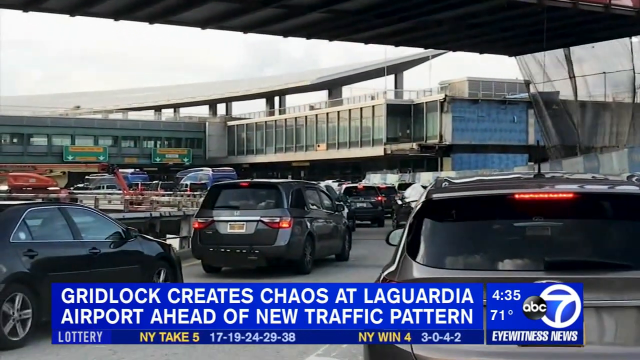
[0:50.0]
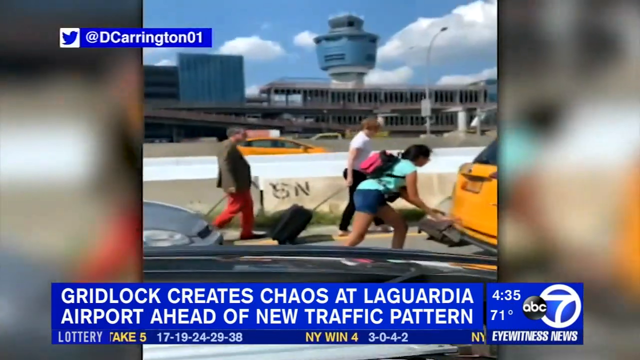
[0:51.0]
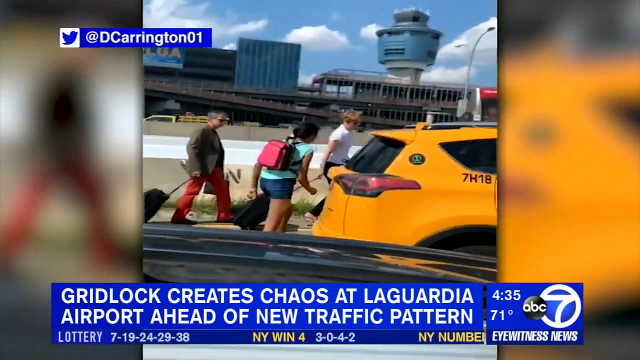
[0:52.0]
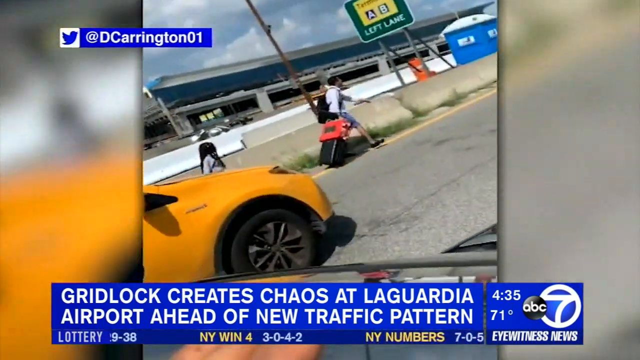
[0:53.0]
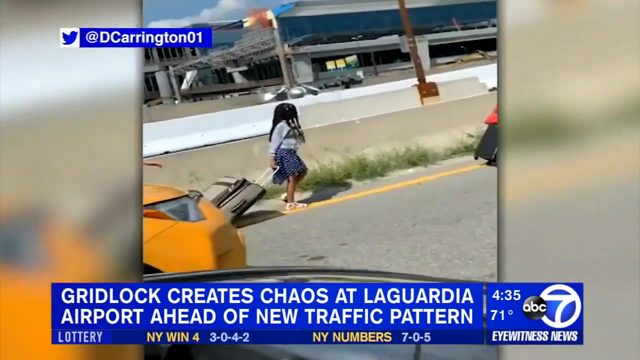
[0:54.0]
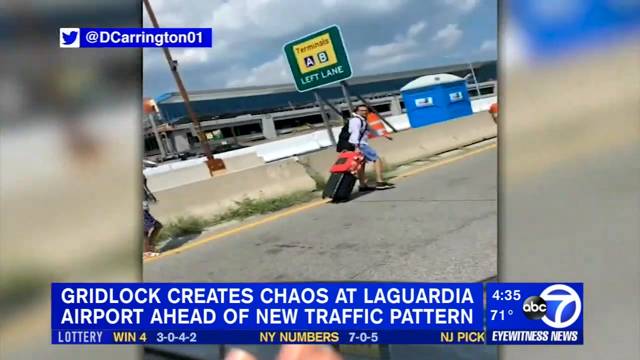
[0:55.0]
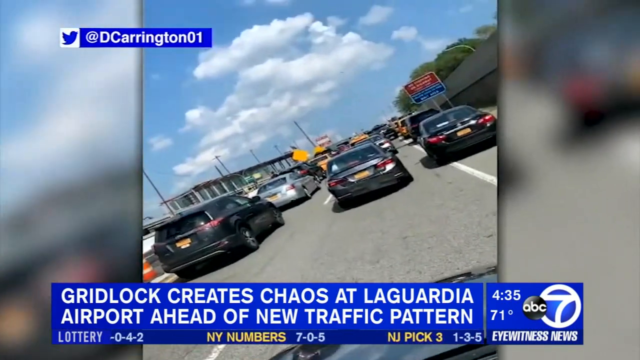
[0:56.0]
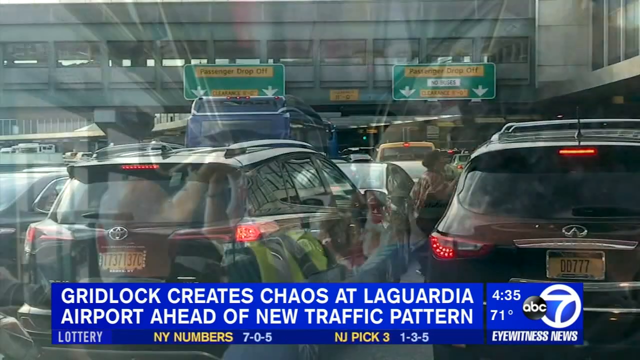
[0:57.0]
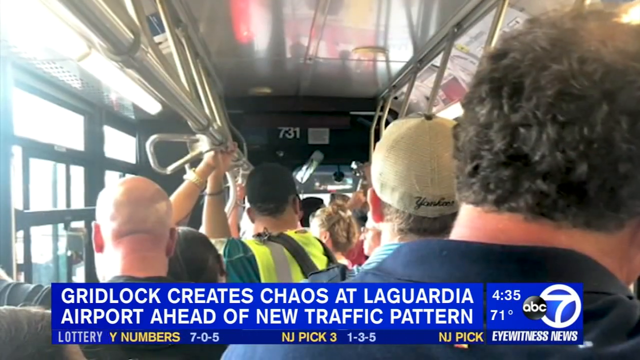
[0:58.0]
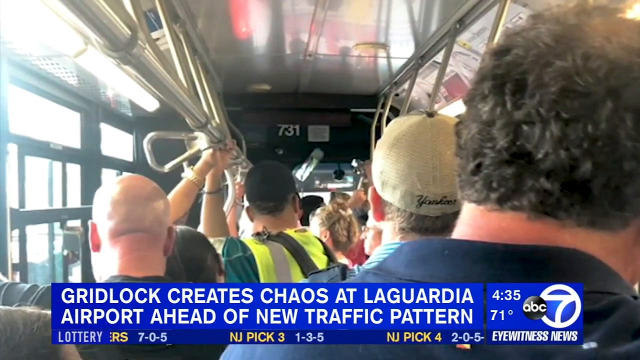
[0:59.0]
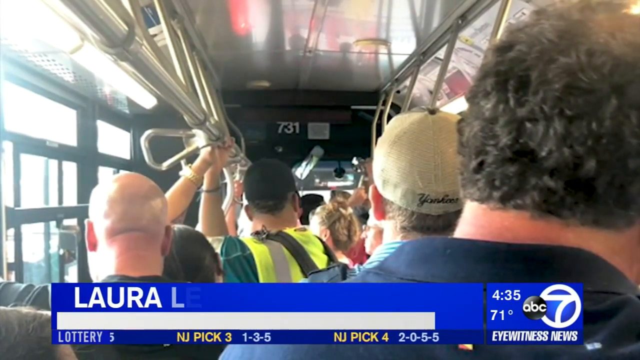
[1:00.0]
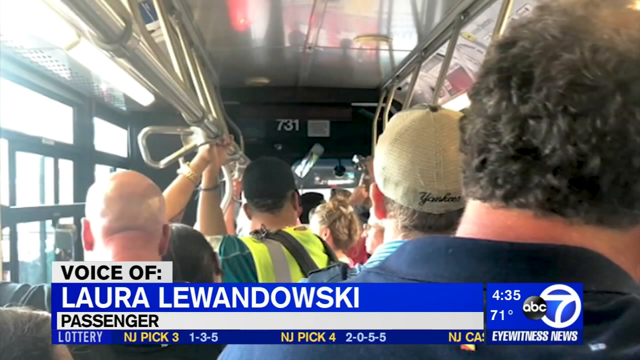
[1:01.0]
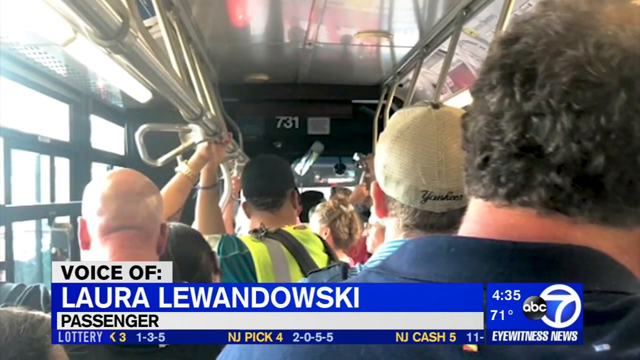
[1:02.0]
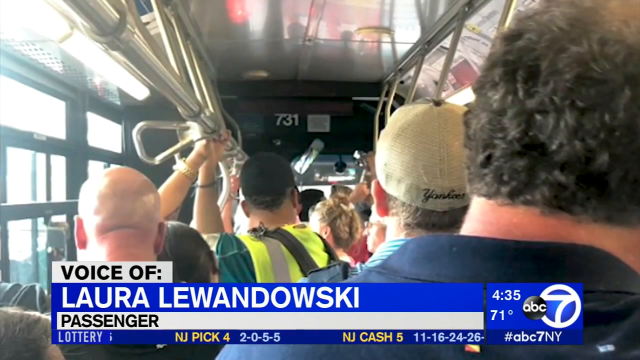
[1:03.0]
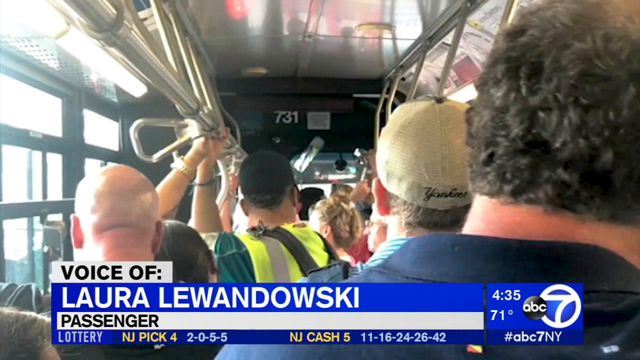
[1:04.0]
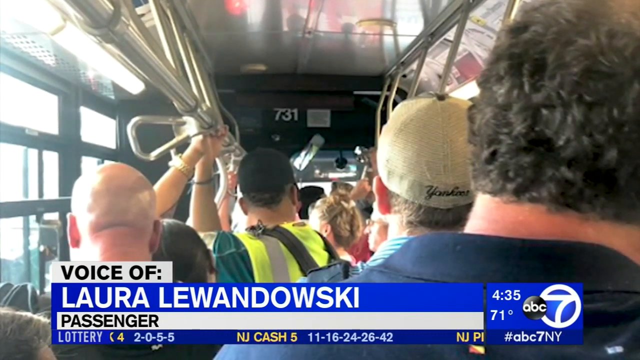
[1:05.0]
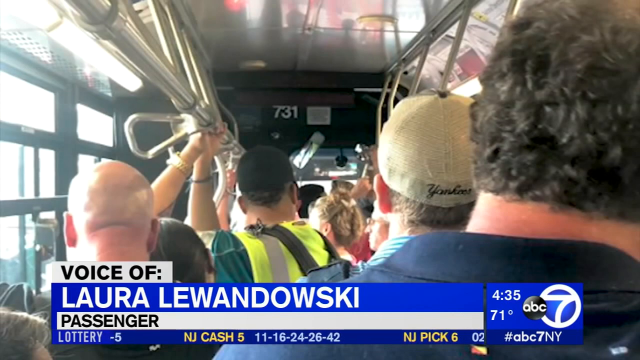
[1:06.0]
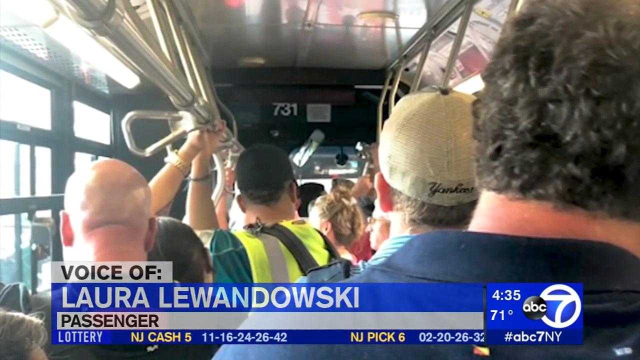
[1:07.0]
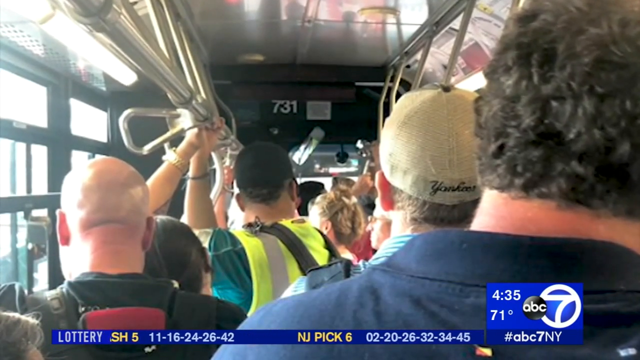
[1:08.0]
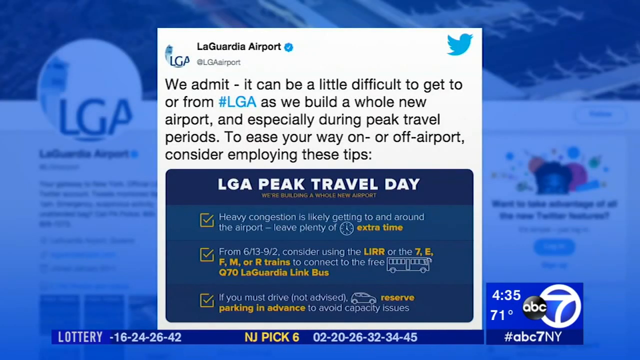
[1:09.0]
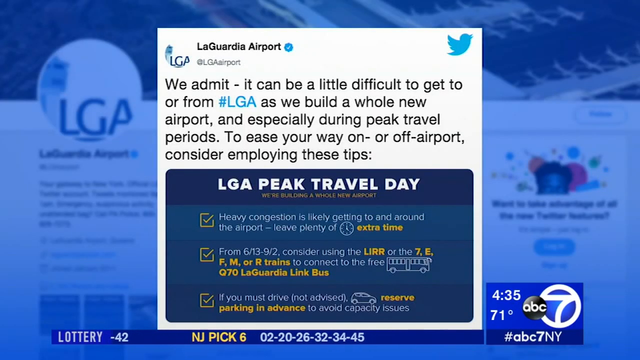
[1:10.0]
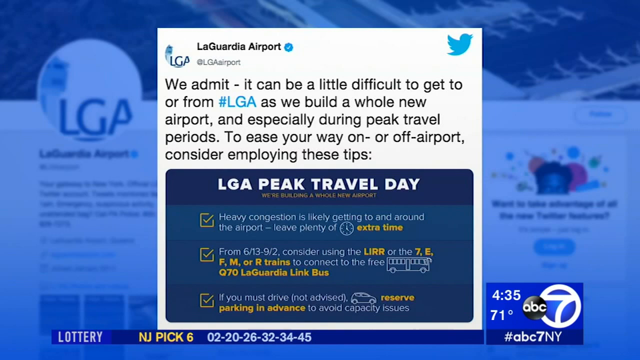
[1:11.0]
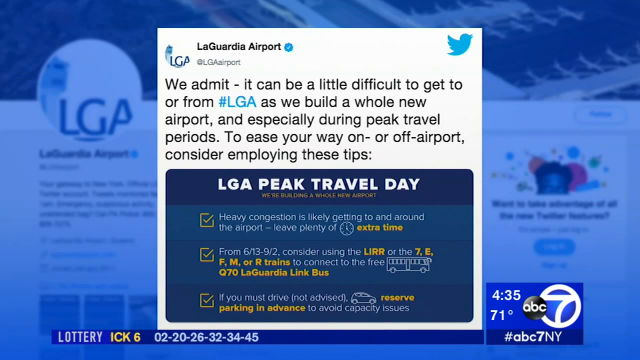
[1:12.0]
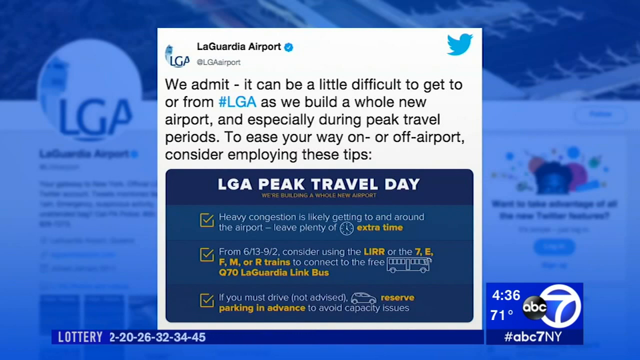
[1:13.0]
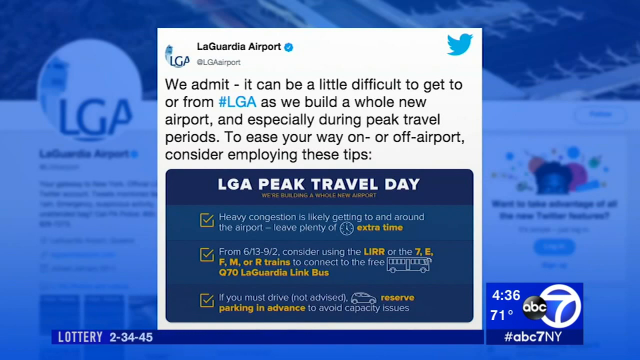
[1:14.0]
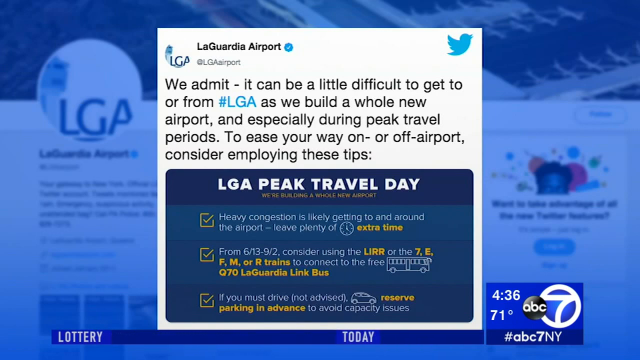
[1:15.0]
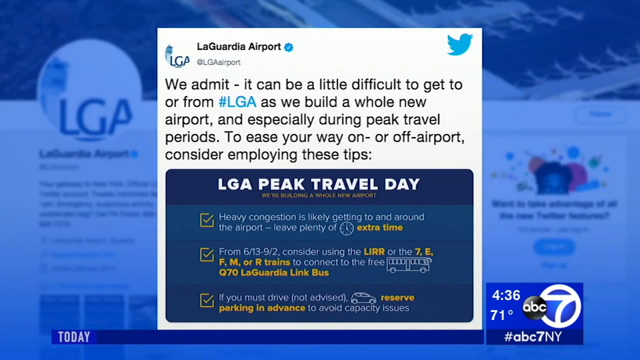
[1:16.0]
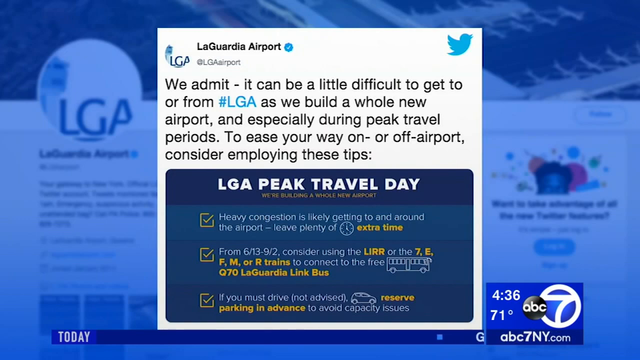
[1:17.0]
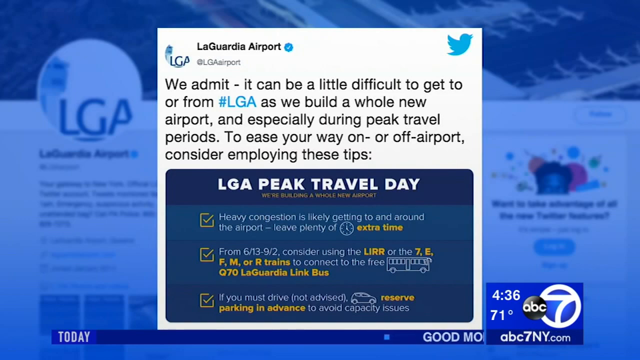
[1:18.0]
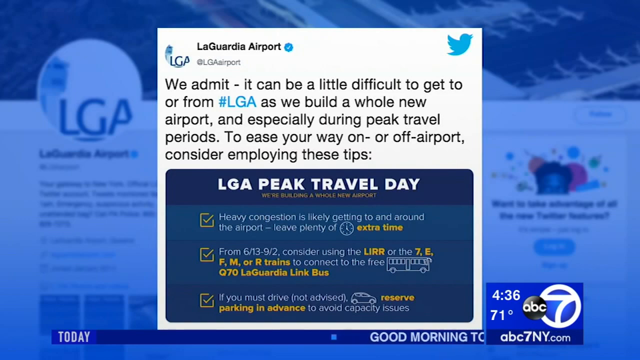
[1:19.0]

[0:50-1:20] Many cars fill a road and seem to be in traffic; the road seems to be underground, possibly under a bridge. Text in white over a blue background reads "gridlock creates chaos at Lagardia airport ahead of new traffic patterns". Pedestrians are walking, and people are in a bus. Some people drag their suitcases along the road. Then text appears that reads "we admit it can be a little difficult to get to or from #LGA as we built a whole new airport and especially during peak travel periods to ease your way on or off airports. Consider employing these tips."